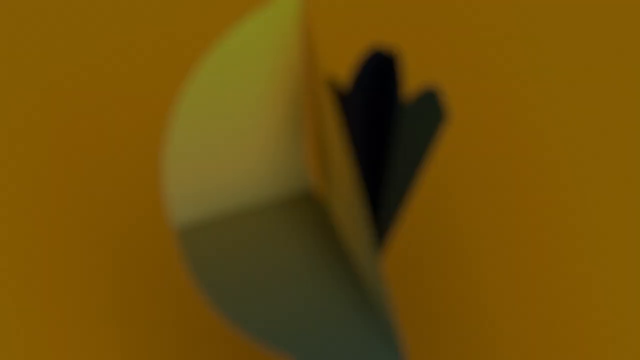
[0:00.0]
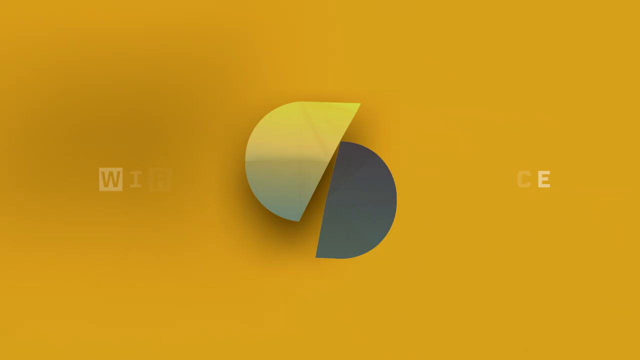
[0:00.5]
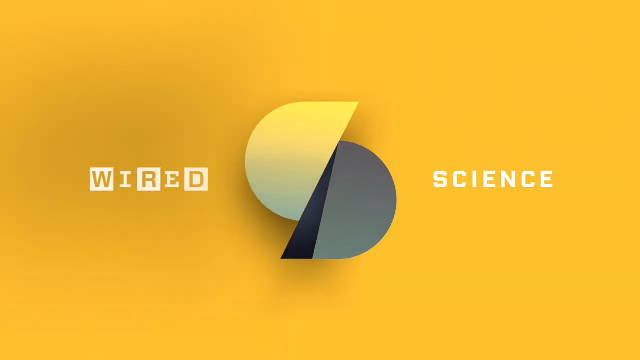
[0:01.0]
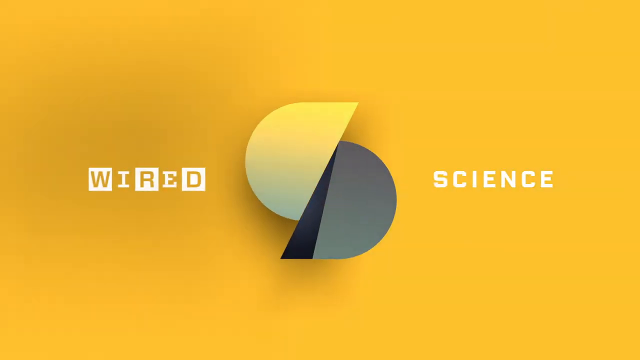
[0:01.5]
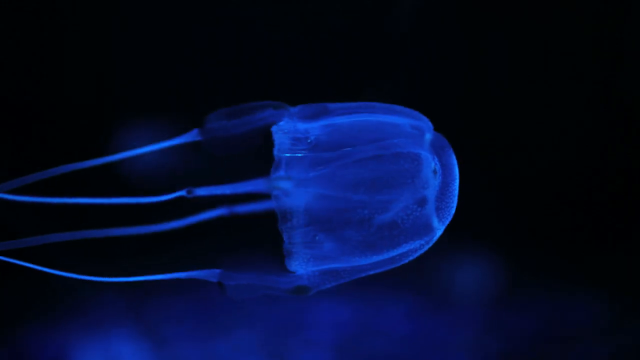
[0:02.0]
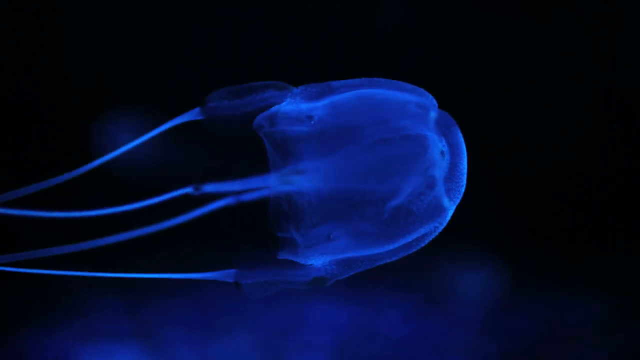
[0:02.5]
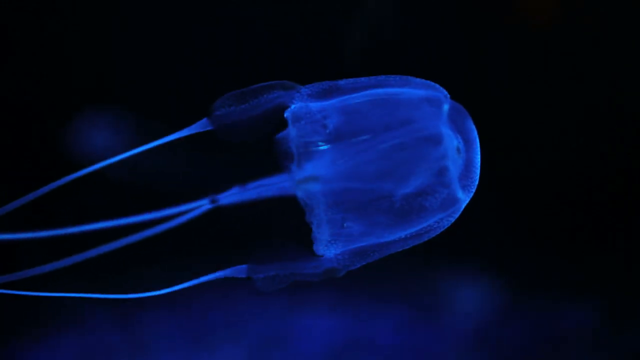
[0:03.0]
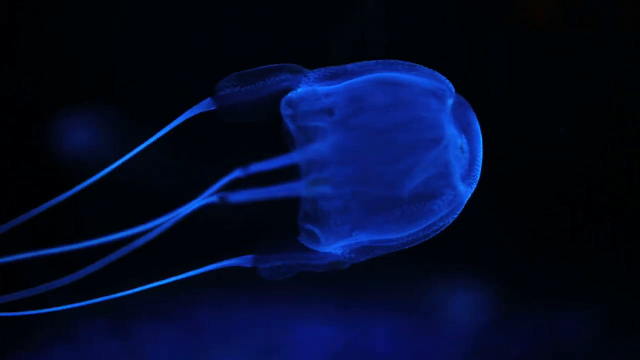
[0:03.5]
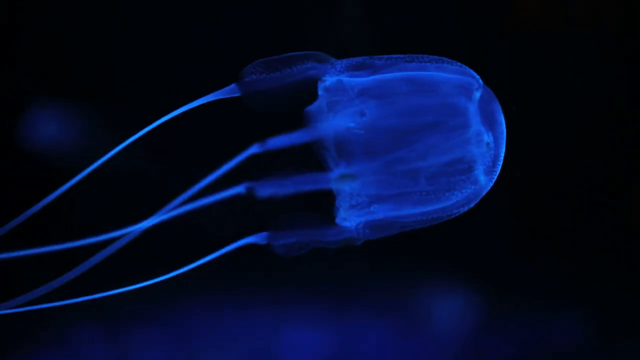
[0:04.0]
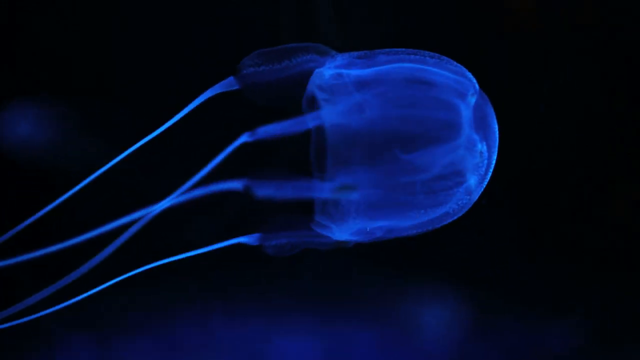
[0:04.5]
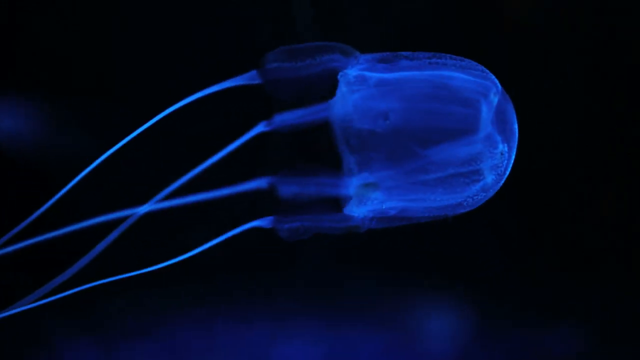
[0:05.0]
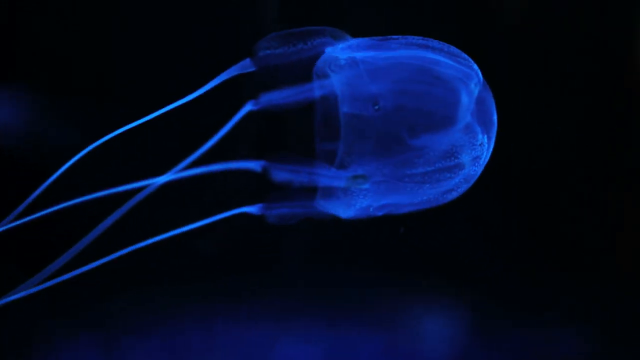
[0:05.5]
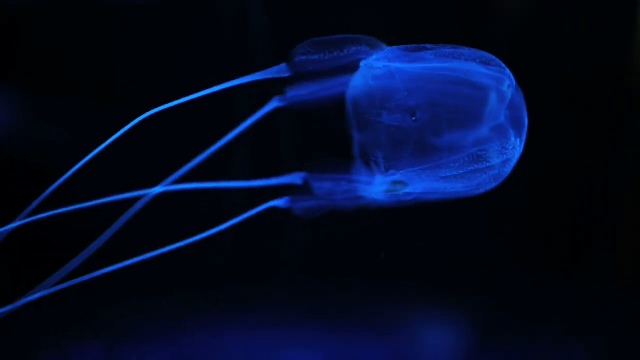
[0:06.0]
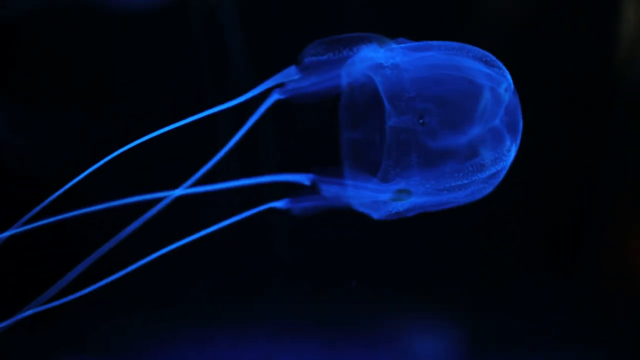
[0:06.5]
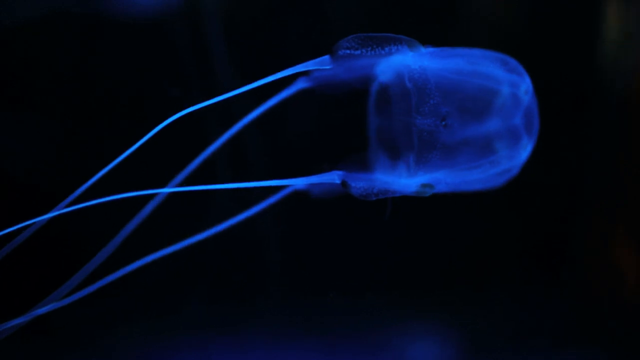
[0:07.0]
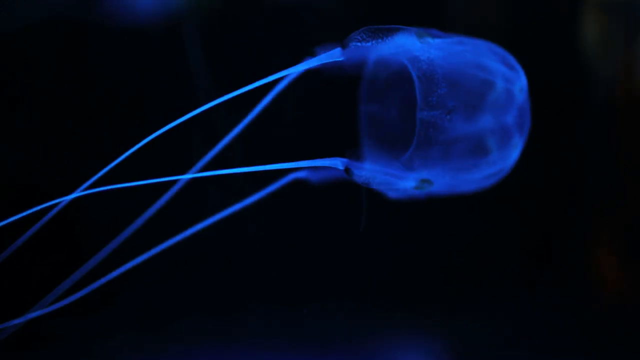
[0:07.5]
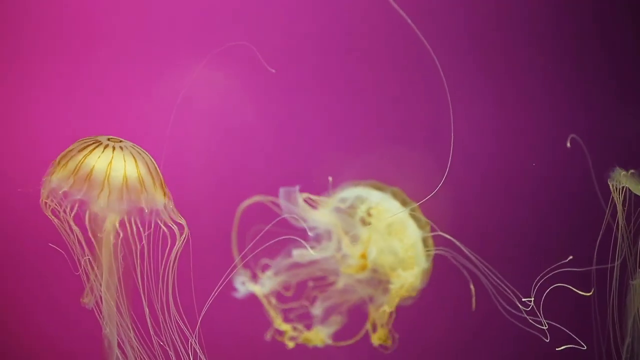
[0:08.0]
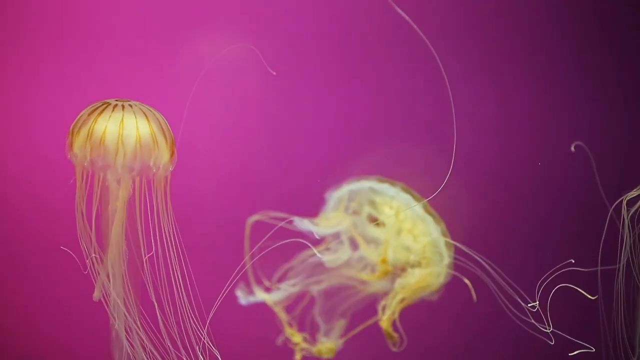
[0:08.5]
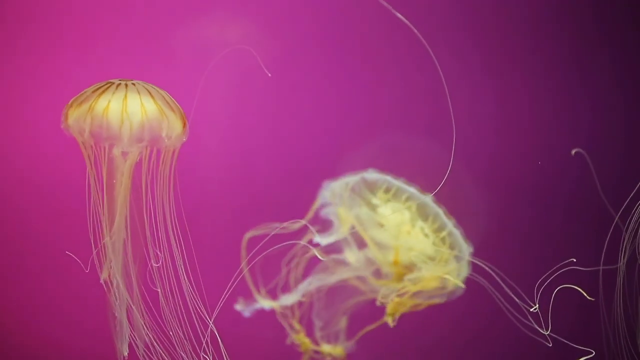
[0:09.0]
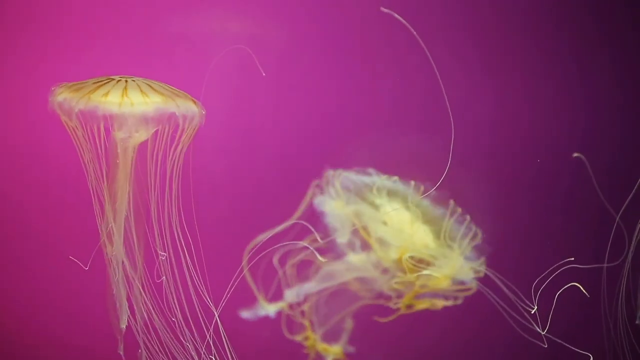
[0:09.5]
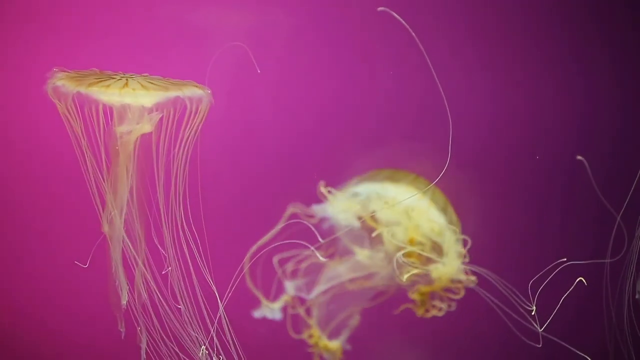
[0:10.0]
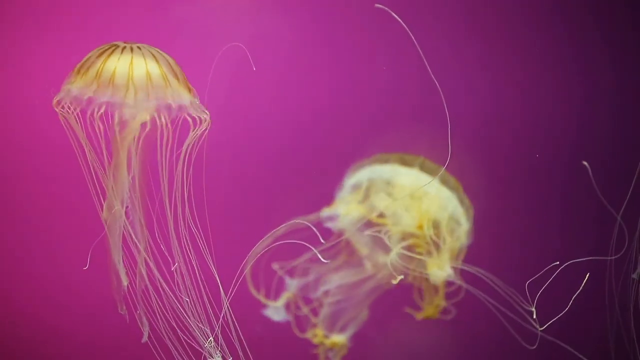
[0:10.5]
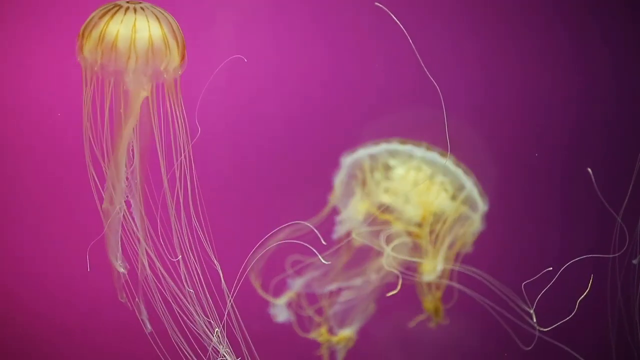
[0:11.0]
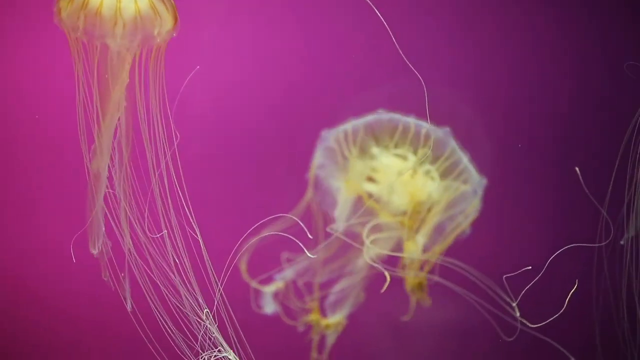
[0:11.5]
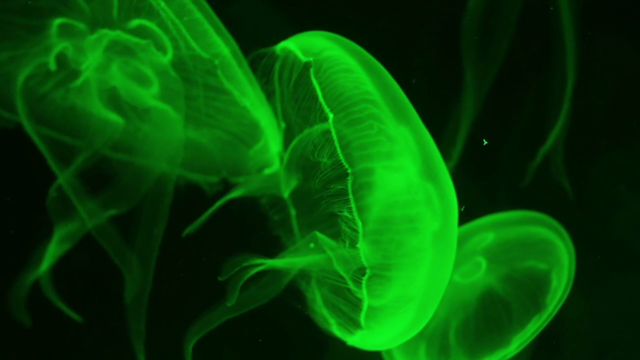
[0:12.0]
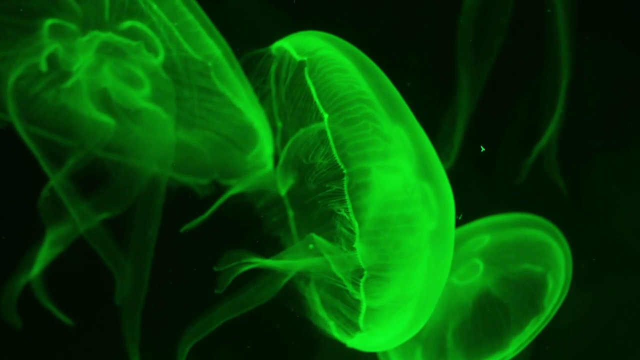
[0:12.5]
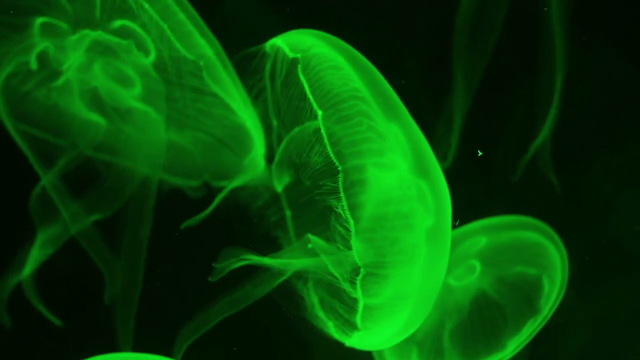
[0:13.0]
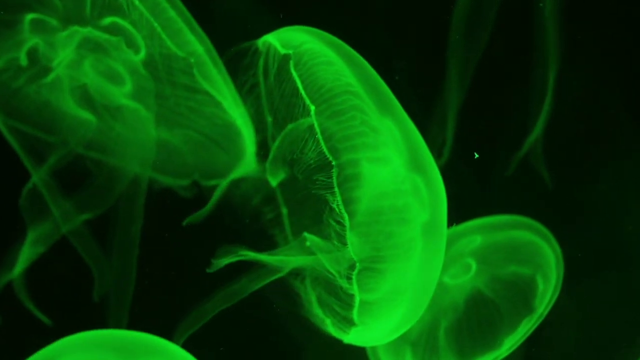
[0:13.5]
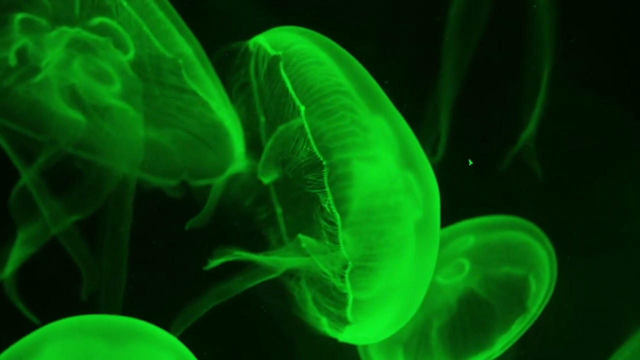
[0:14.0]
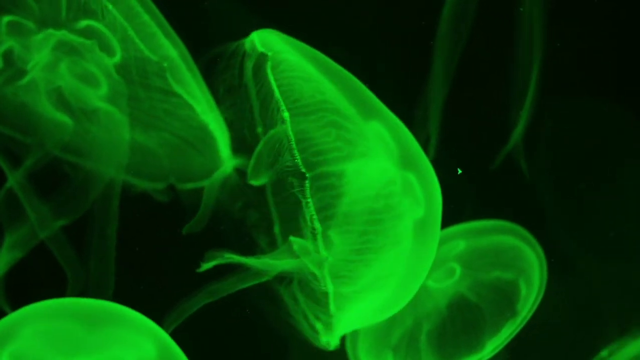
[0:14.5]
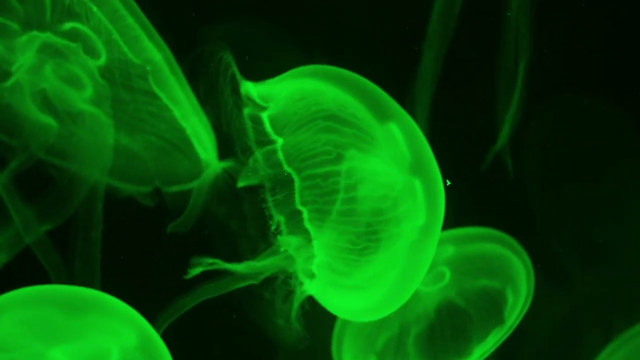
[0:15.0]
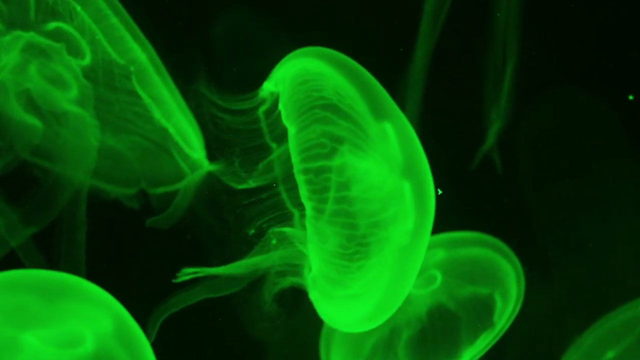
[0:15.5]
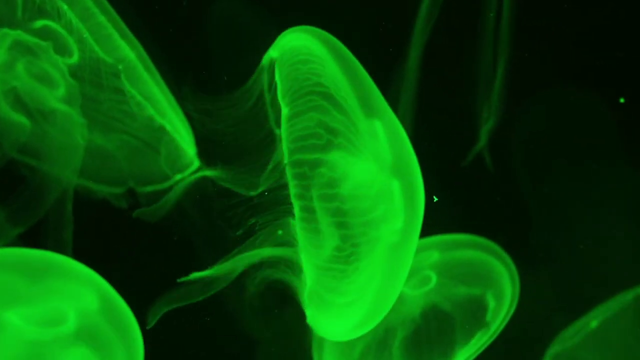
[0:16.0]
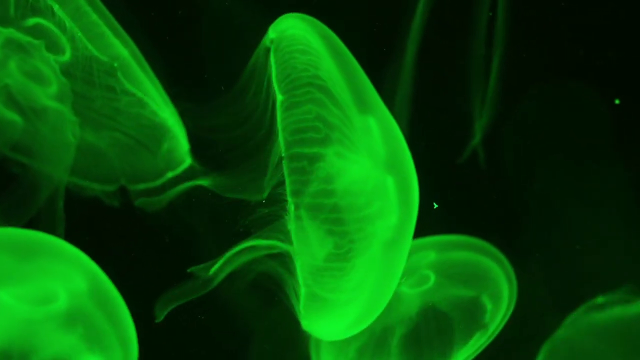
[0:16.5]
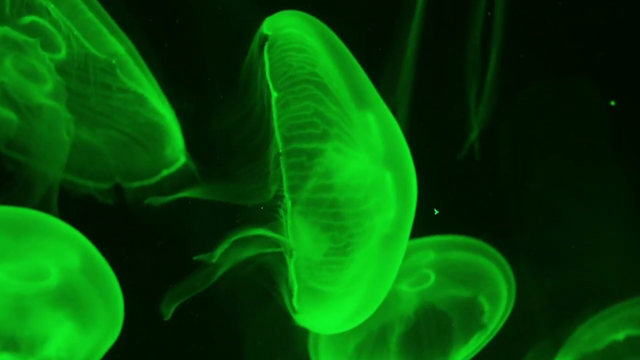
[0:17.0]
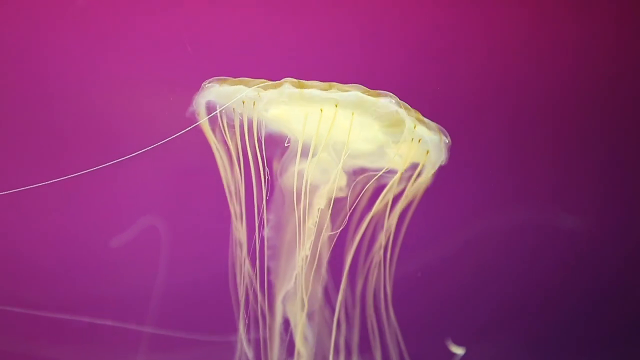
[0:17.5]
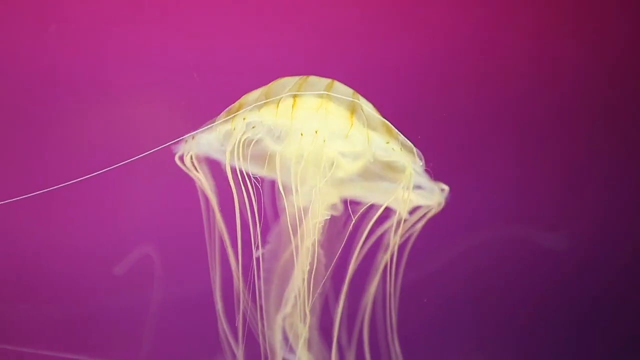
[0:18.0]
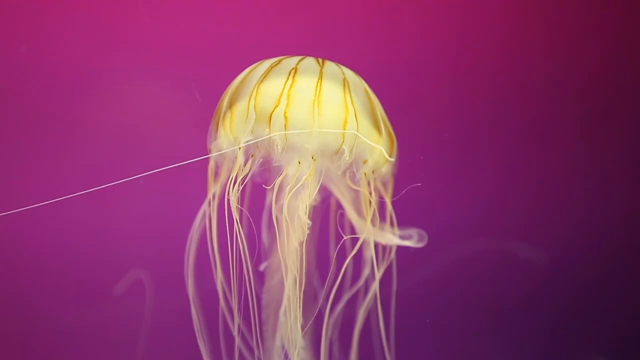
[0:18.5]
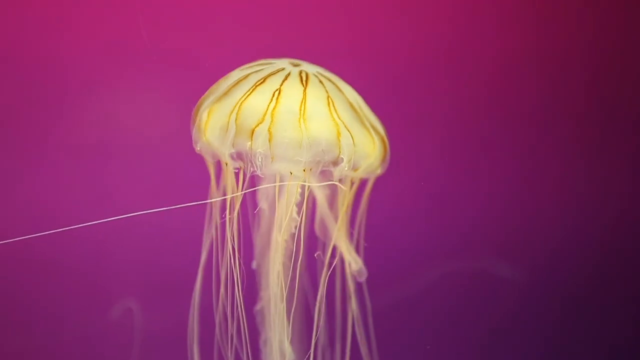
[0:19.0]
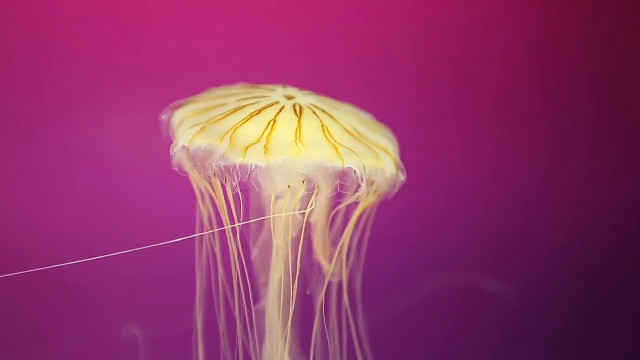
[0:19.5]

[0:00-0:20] The scene opens on a yellow background with a yellow and black logo in the center. To the left of the logo is the word "WIRED" in white font, and to the right is the word "SCIENCE", also in white. The video cuts to a fluorescent jellyfish swimming through a black abyss, glowing vibrant blue along its dome and through its four trailing tentacles. Next comes a shot of multiple jellyfish, apparently three, with a golden coloration on a pink background, undulating as they swim for a moment. A cut leads to a different kind of jellyfish on a black background; there are approximately four of them, and they glow a vibrant neon green as they swim. The footage then cuts again to one of the golden jellyfish on the pink background, which has many tentacles, as it undulates and swims.